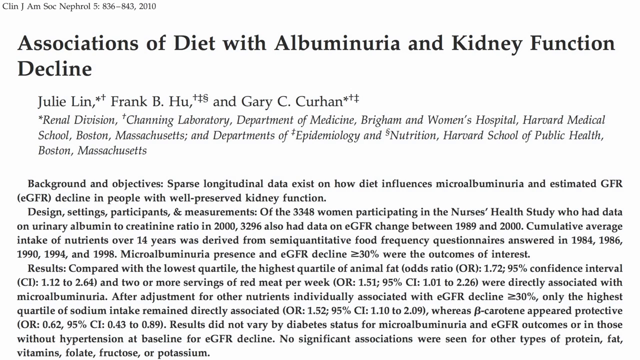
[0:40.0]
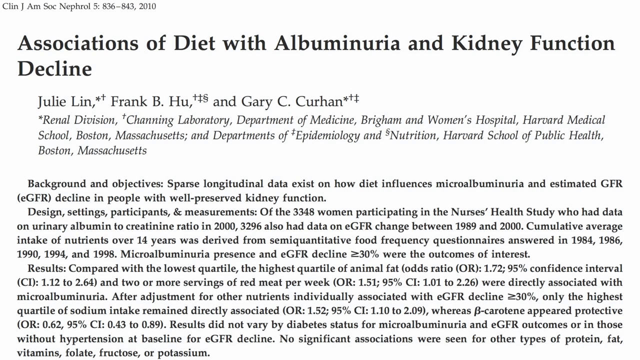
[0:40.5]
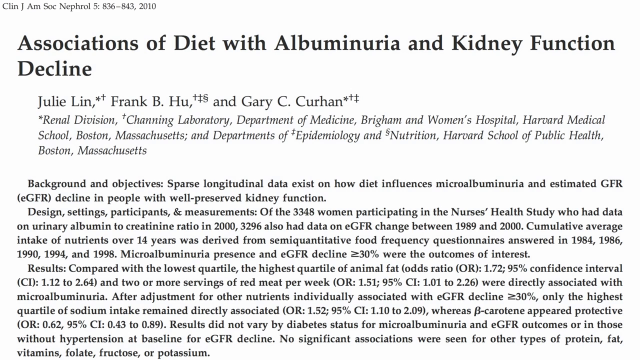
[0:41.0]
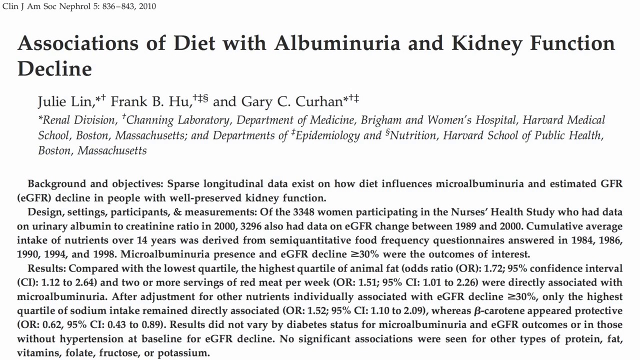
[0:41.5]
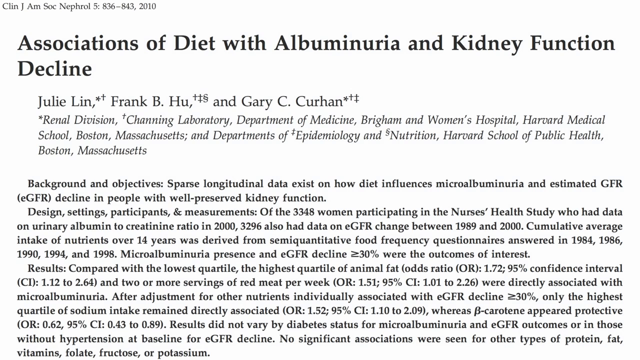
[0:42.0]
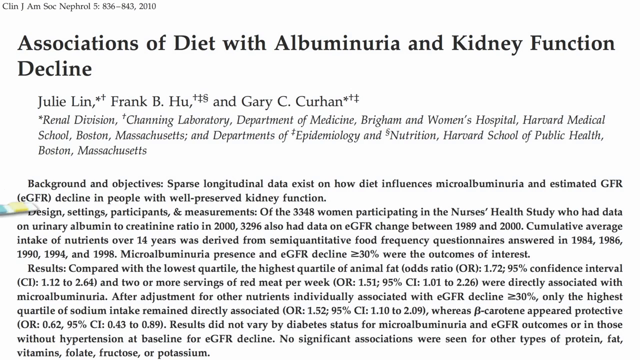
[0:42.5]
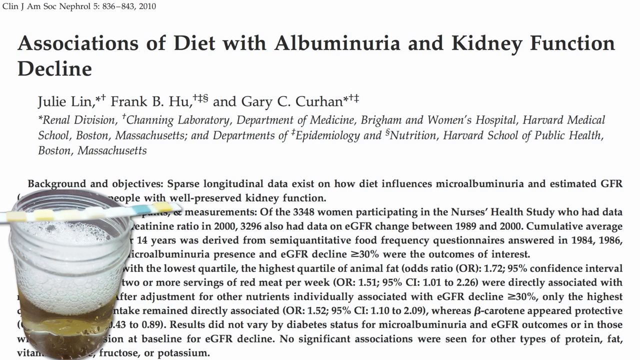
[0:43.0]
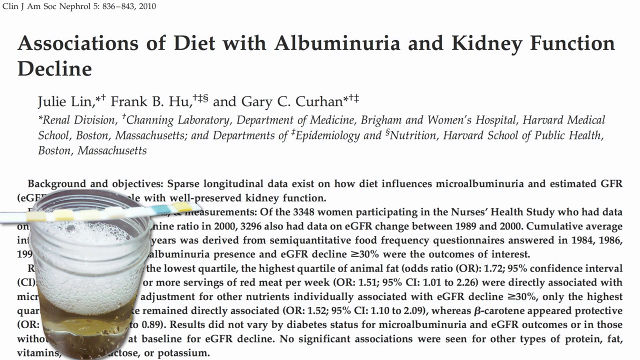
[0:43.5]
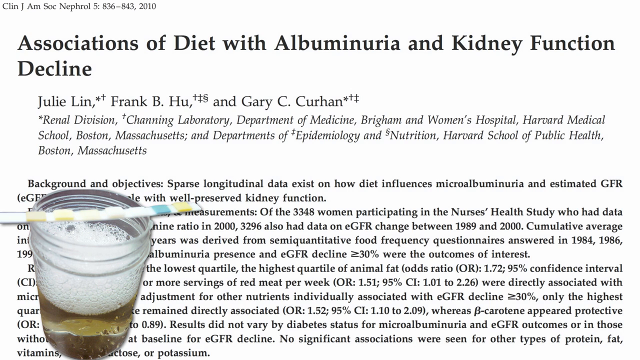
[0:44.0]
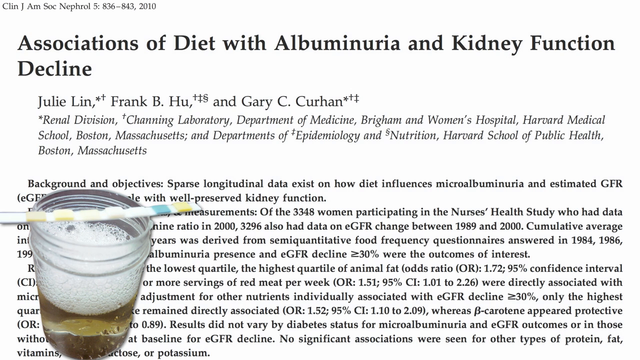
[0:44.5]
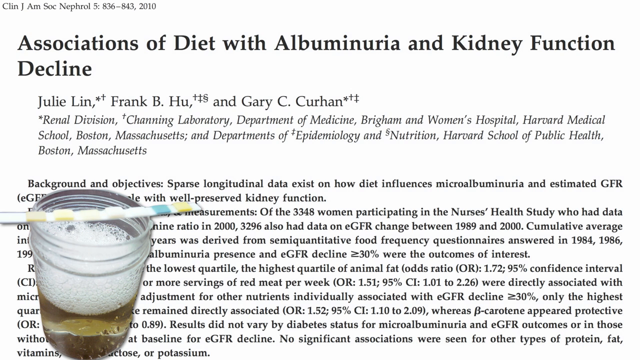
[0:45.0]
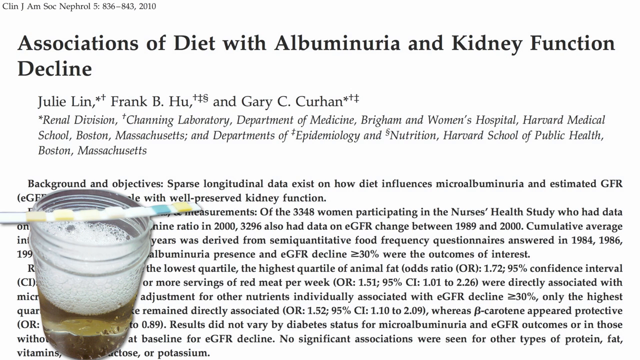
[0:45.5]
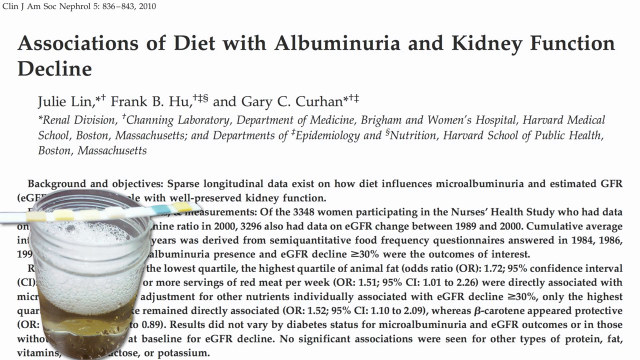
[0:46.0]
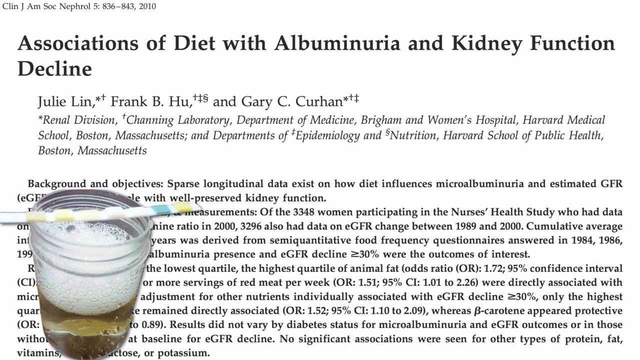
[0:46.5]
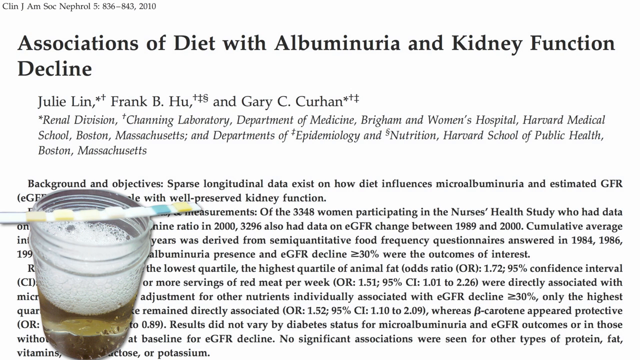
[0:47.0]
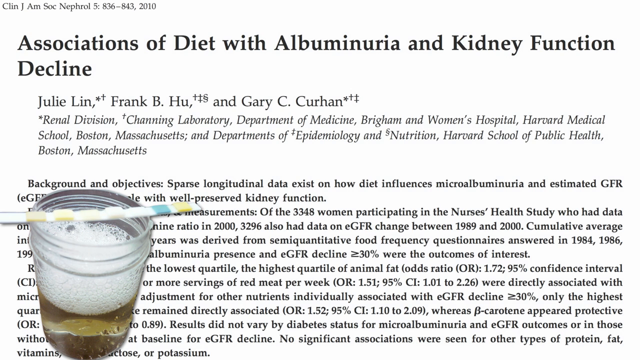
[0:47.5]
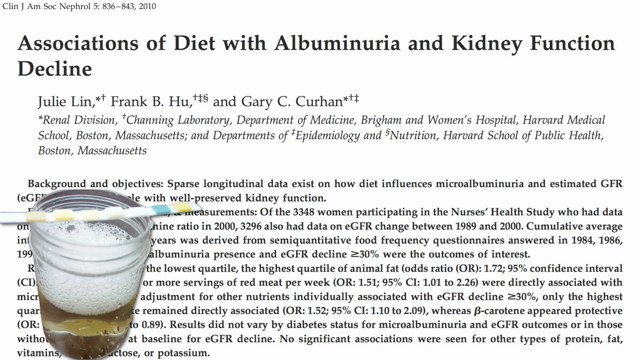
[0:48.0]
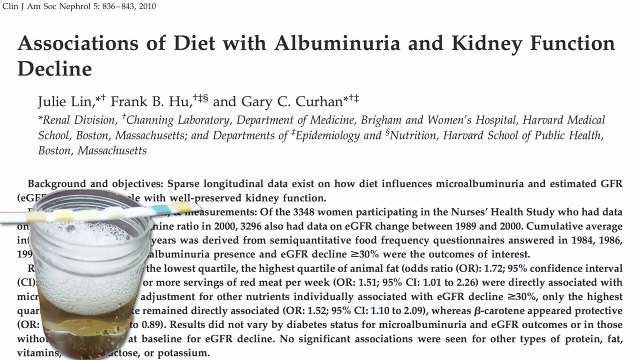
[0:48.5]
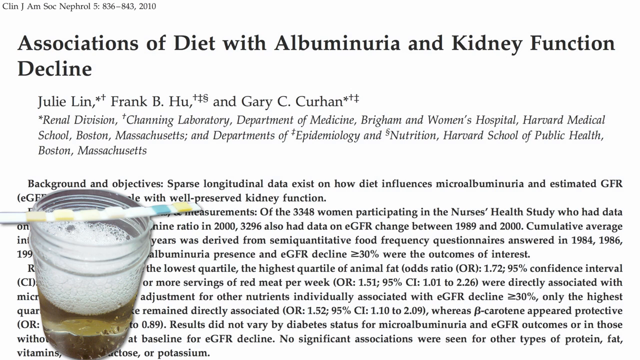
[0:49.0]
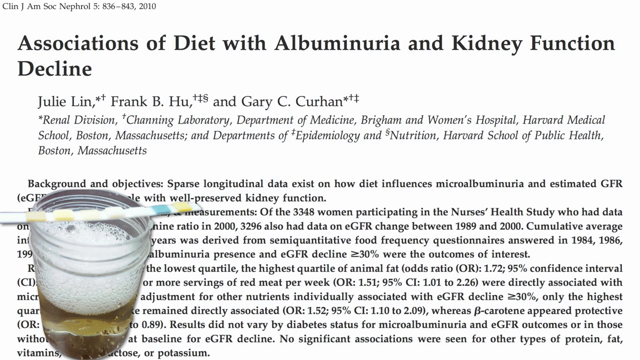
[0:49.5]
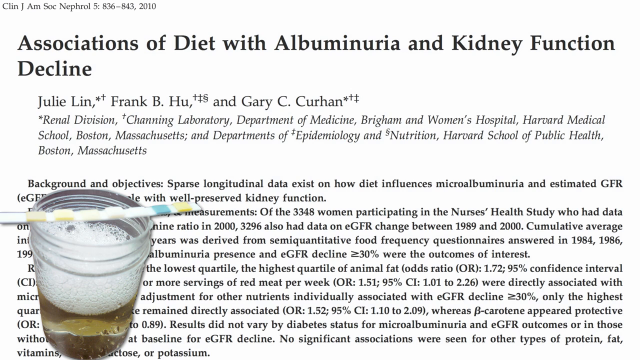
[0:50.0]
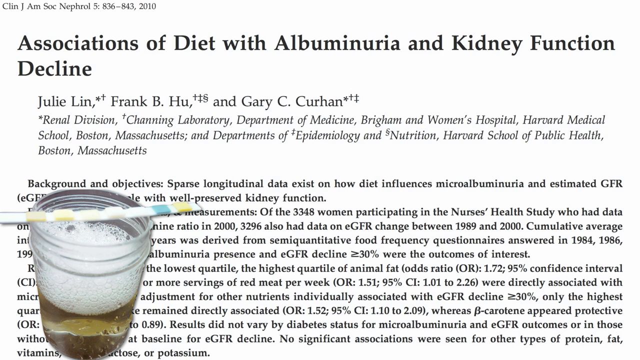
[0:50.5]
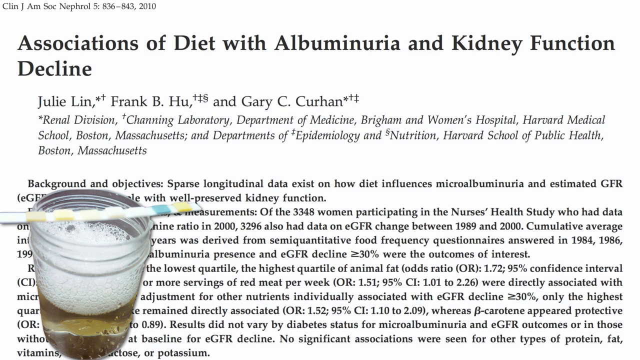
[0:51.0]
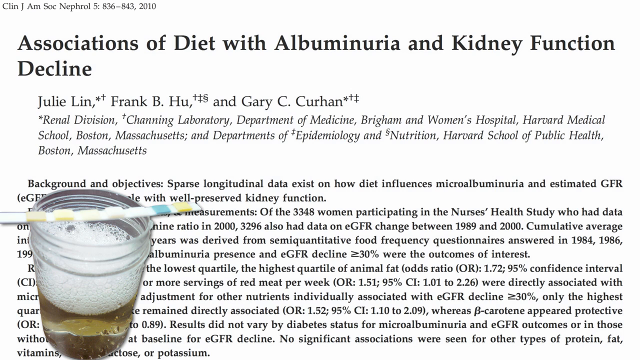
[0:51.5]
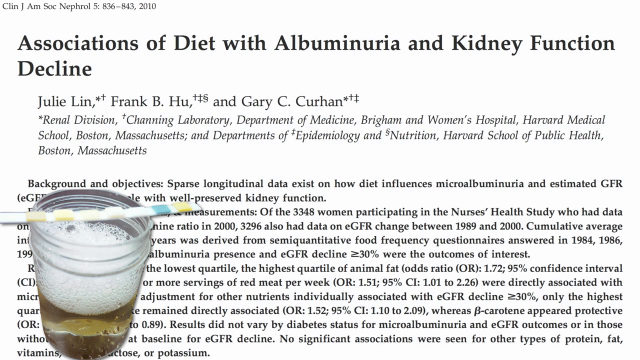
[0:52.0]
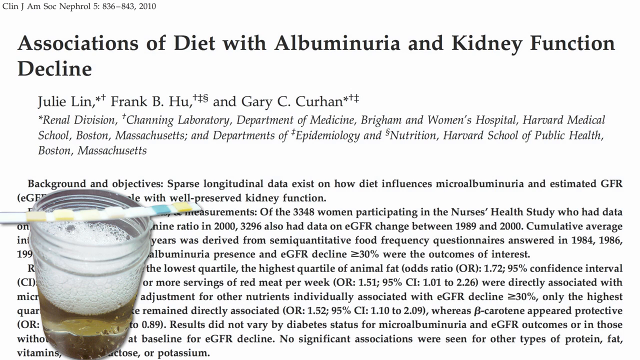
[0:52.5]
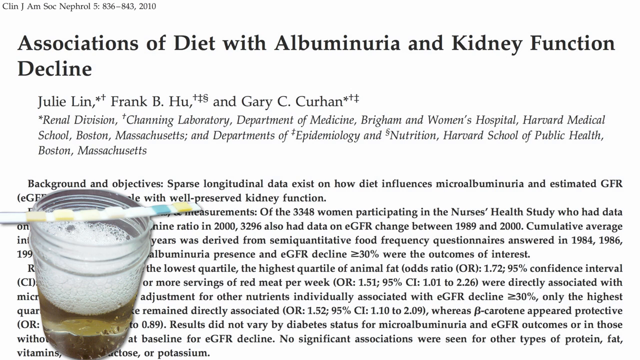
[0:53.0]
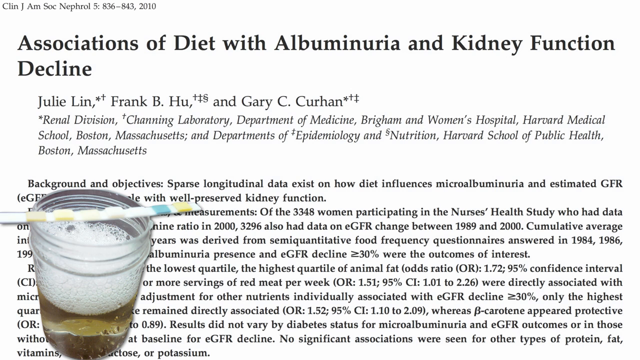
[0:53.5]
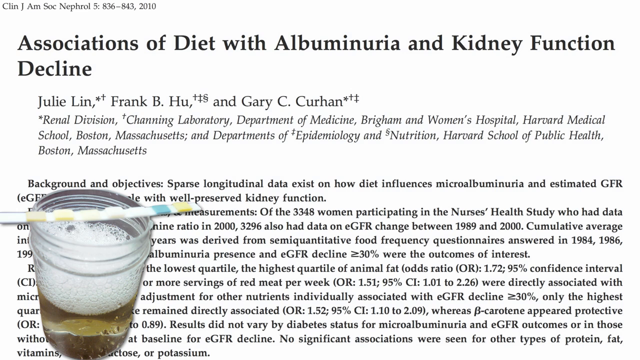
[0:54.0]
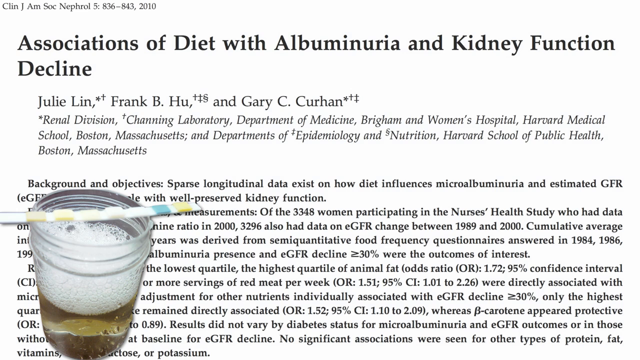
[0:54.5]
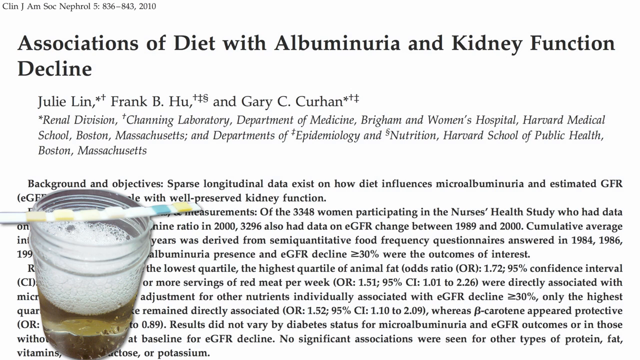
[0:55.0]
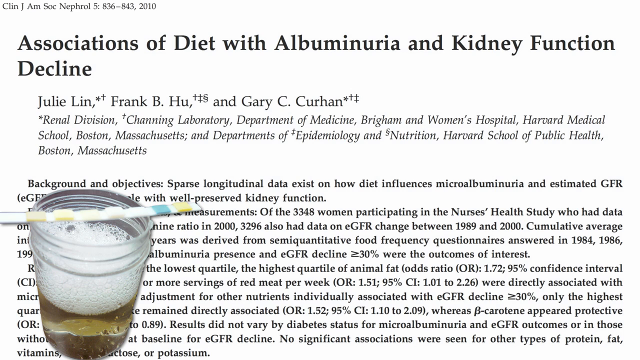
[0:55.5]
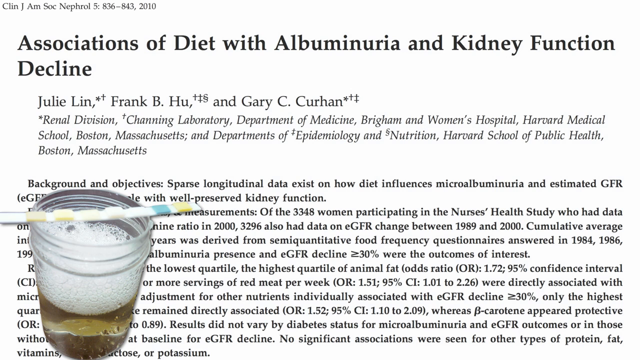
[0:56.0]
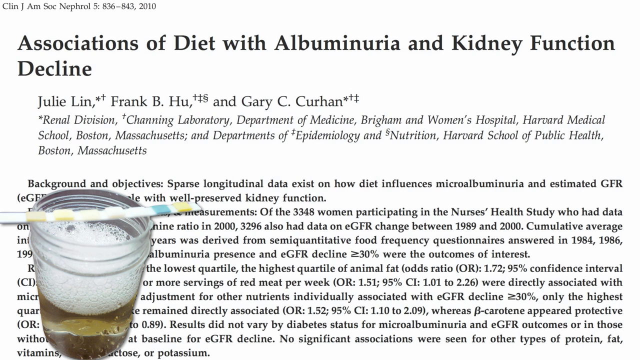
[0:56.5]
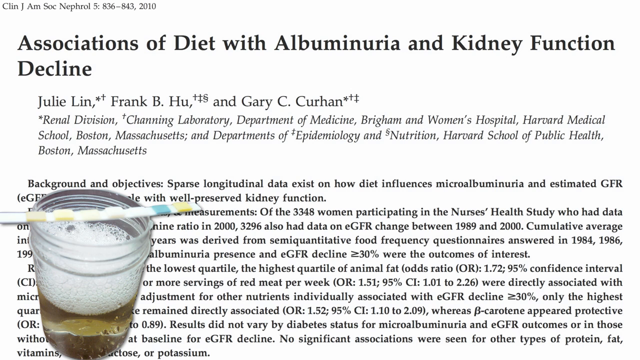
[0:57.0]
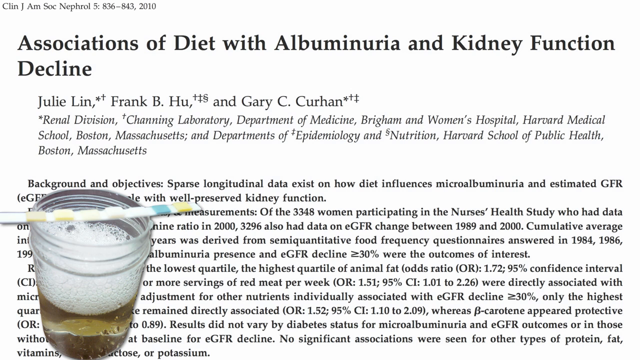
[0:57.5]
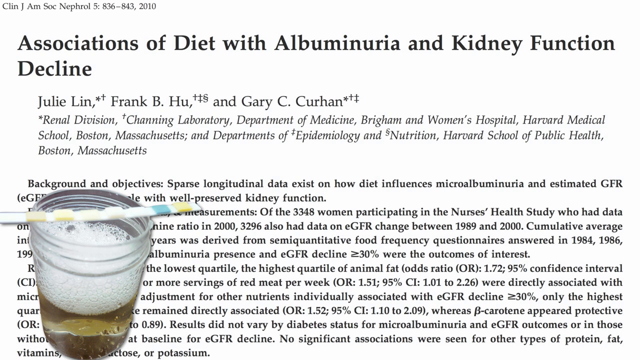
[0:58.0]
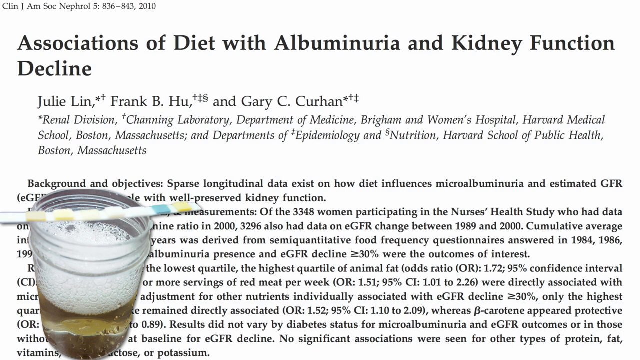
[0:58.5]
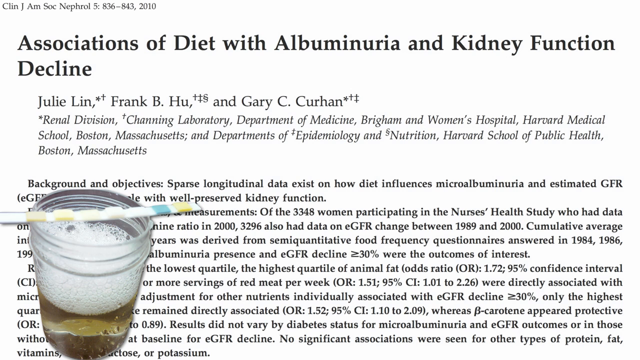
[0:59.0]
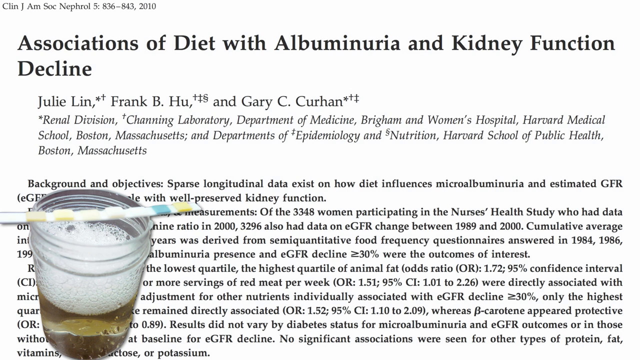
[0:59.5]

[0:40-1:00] A scientific paper titled "associations of diet with albuminuria and kidney function decline" appears, with black writing on a white background. A glass jar pops up, presumably containing urine with a lot of white bubbles in it. A test strip lies across the jar with different colors and about six different sections; some look sort of like fluffy foam and some are like paper, and at the end one part is blue and one part is yellow. The animation then stops on the paper, which reads "Background and objectives. Sparse longitudinal data exist on how diet influences microalbuminuria and estimated GFR decline in people with well-preserved kidney function."